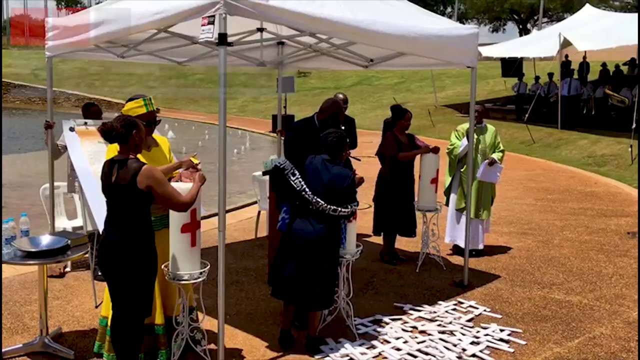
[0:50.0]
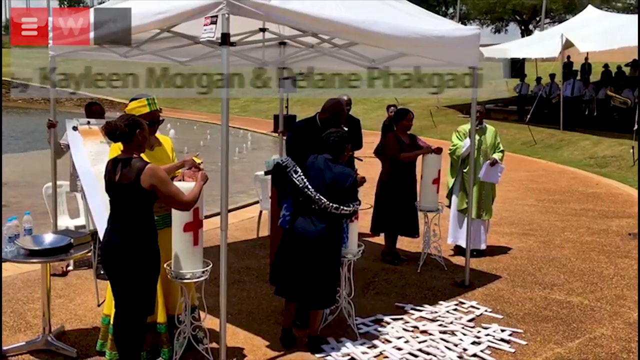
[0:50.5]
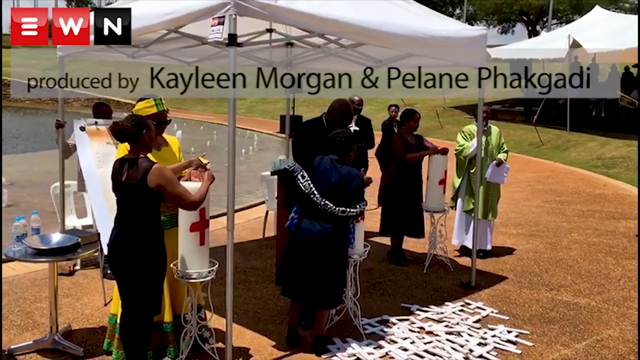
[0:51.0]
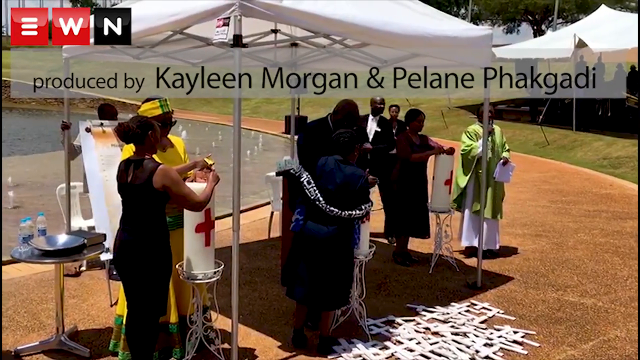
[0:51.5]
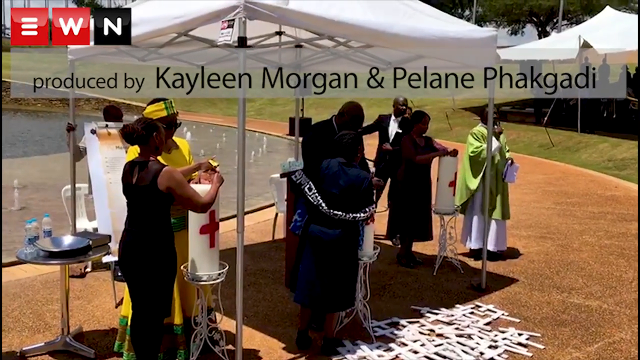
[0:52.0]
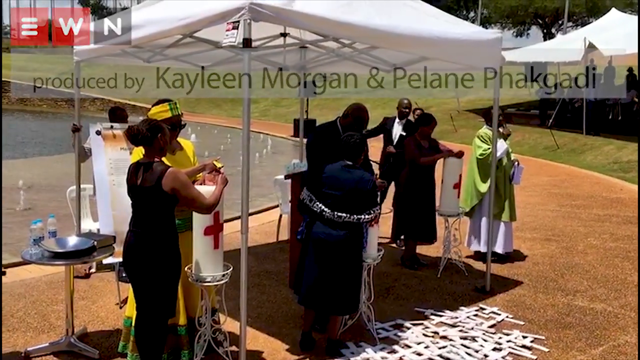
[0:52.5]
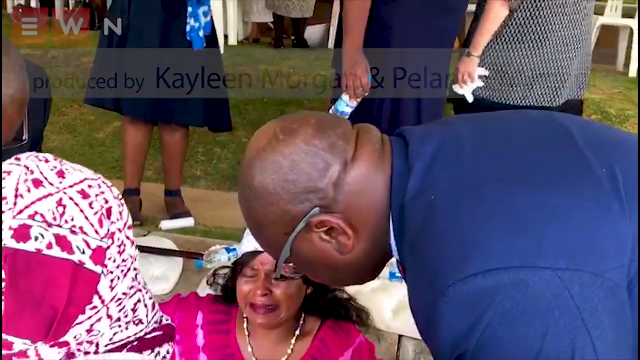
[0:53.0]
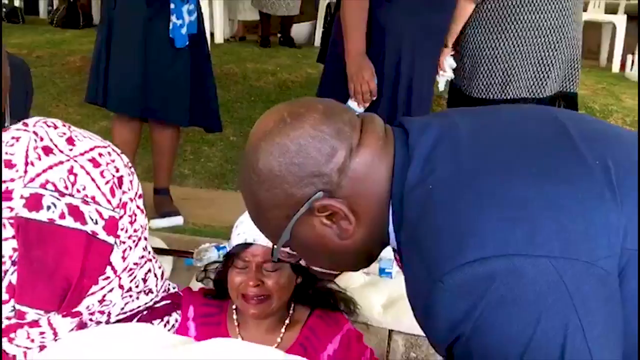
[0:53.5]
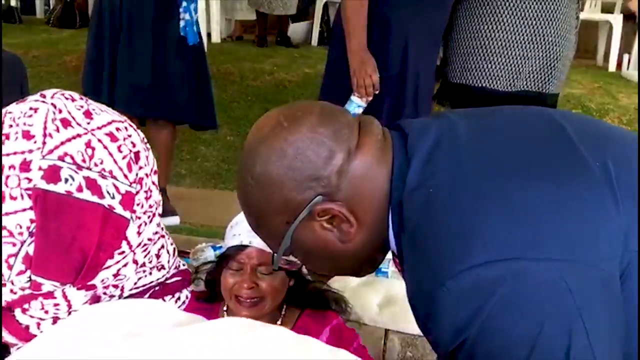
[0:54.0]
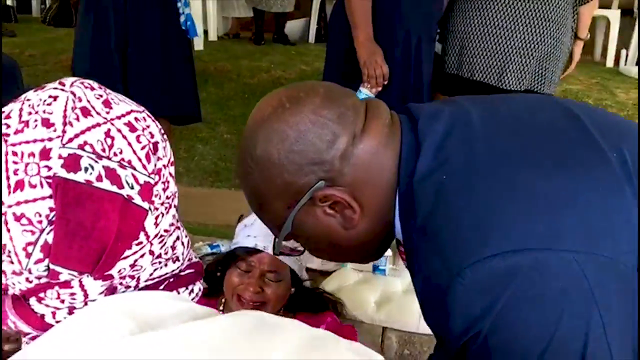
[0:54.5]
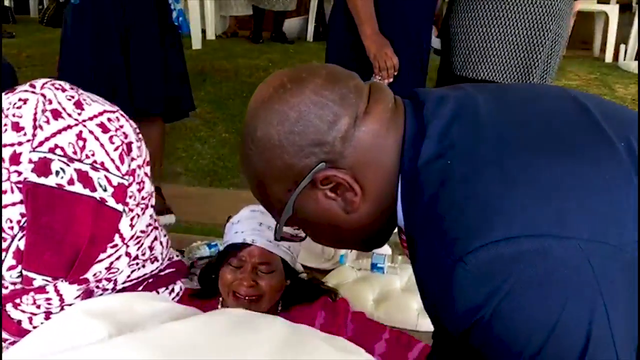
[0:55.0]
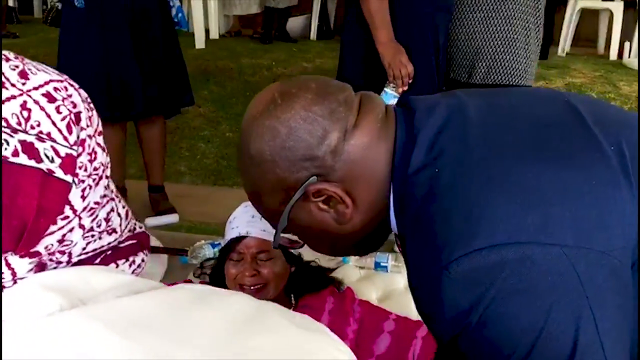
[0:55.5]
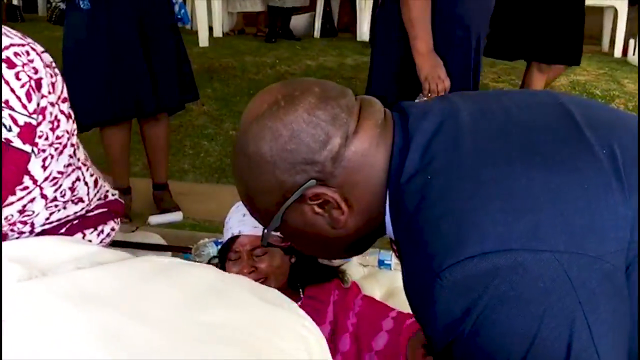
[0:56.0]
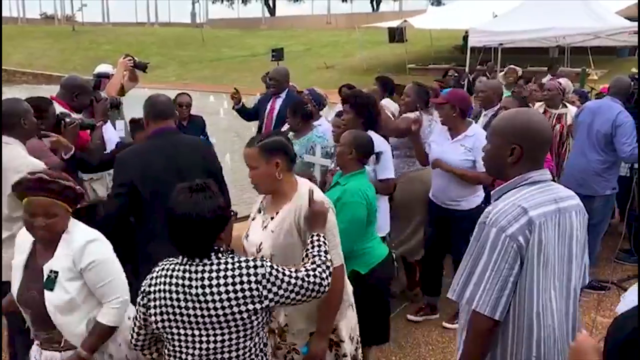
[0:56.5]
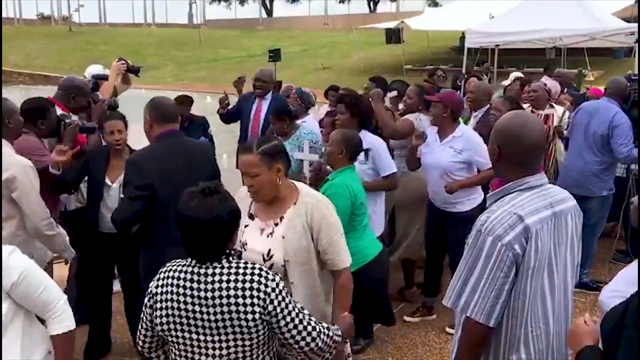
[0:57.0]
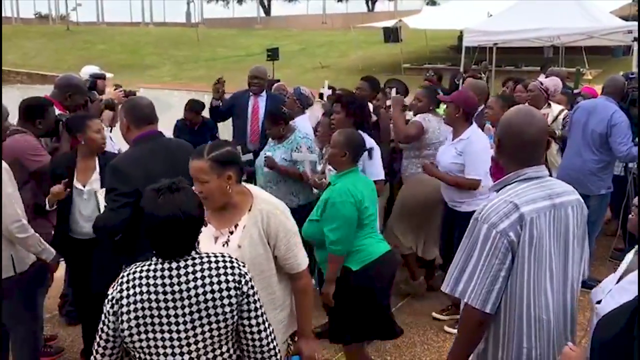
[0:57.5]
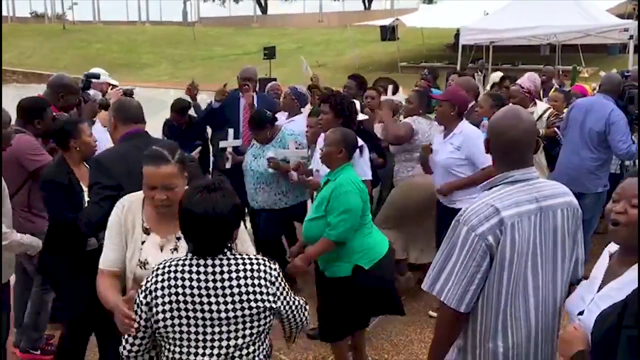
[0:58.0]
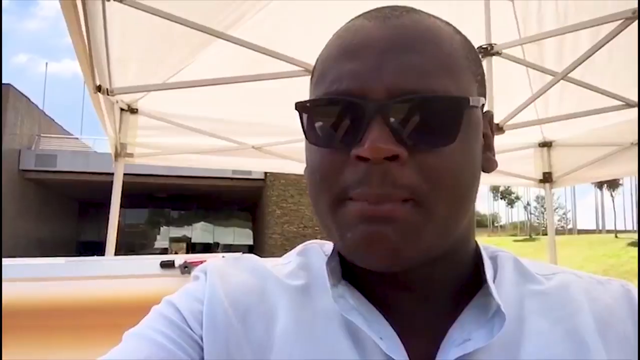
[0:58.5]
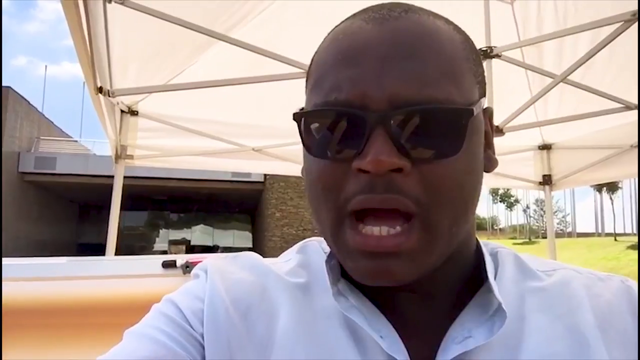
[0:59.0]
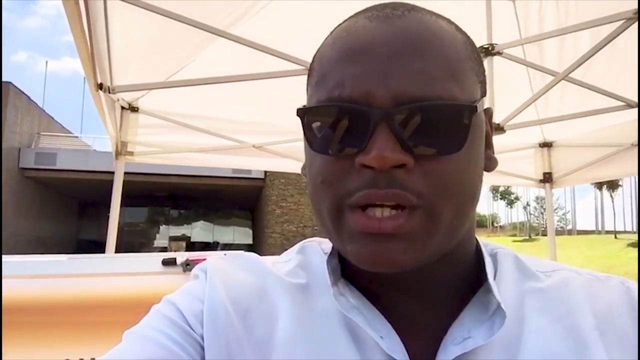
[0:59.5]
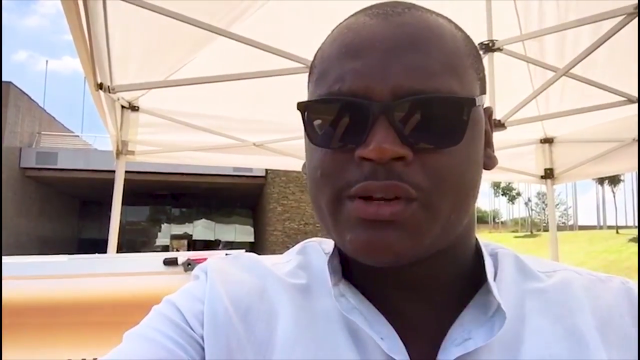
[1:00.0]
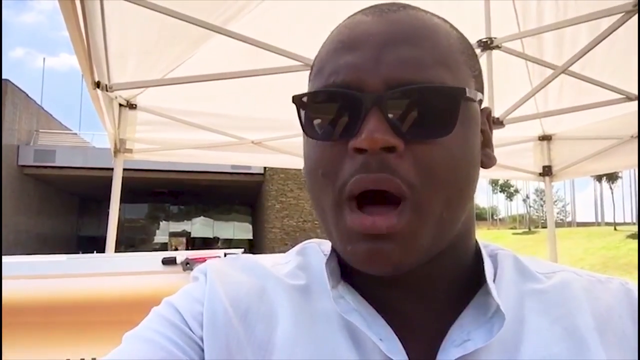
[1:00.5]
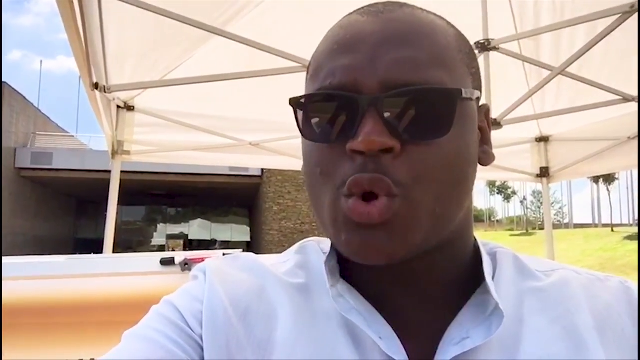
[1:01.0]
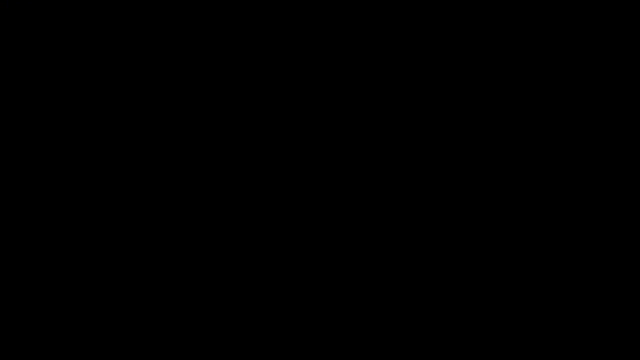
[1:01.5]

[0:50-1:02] Text reads "produced by Kayleen Morgan and Pauline Pagotti", apparently naming the man in sunglasses who keeps talking. Along with the producer credit, a white thing with a red cross on it is visible. Someone is shown crying with a couple of people standing over her, one of whom seems to be wearing some sort of headscarf. People then dance and sing, appearing to hold some sort of celebration. The man in sunglasses continues talking outside. Both women and men are dancing together, and some of them appear to be wearing special outfits.